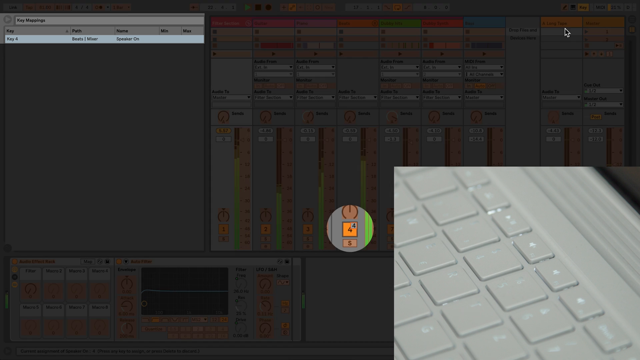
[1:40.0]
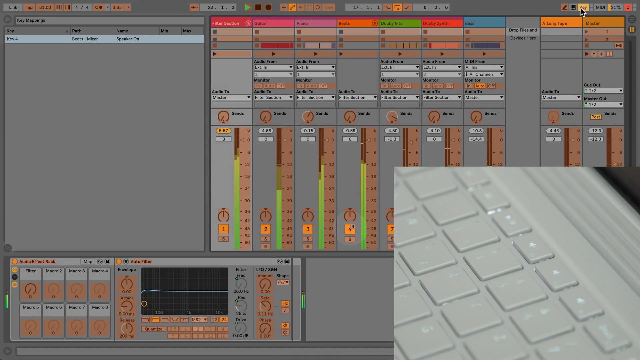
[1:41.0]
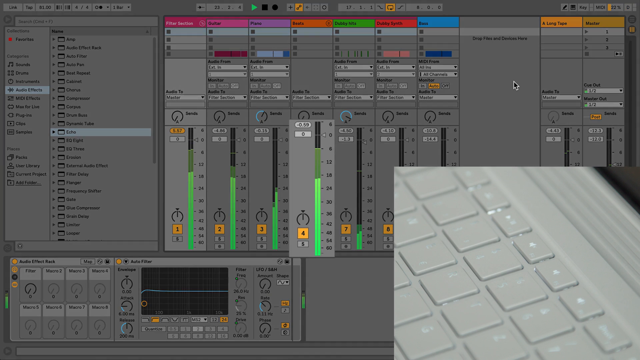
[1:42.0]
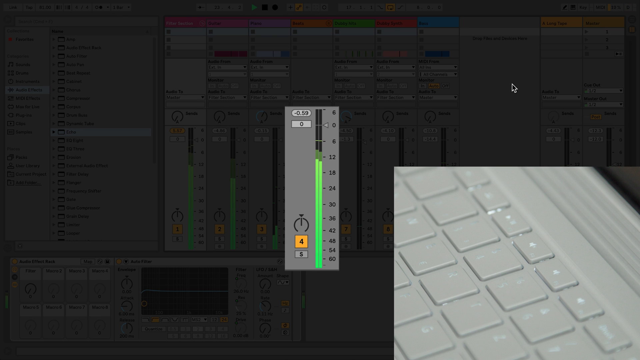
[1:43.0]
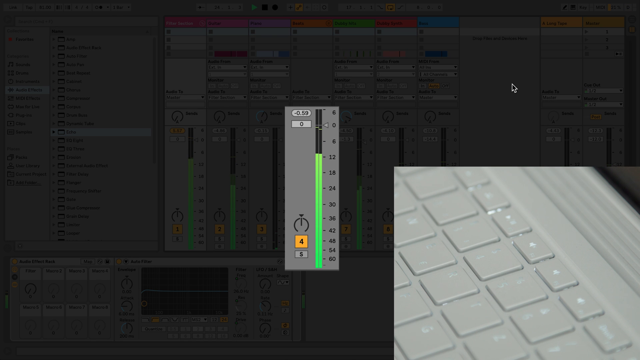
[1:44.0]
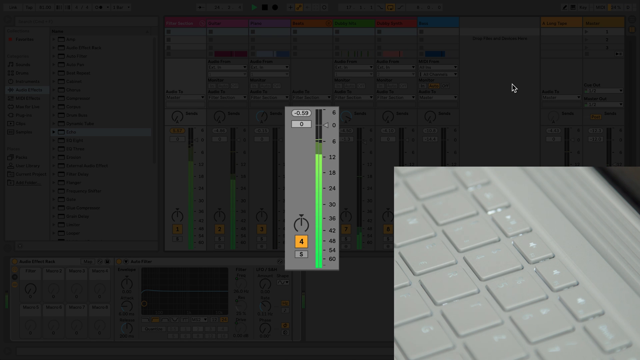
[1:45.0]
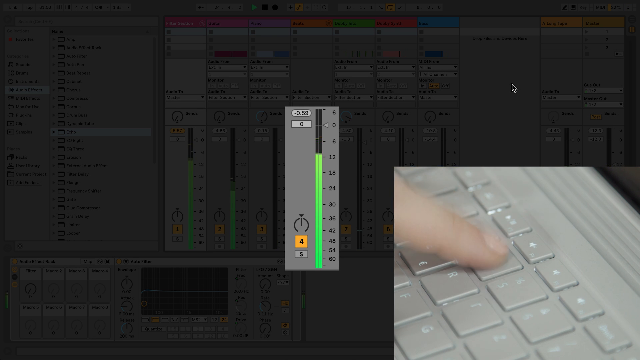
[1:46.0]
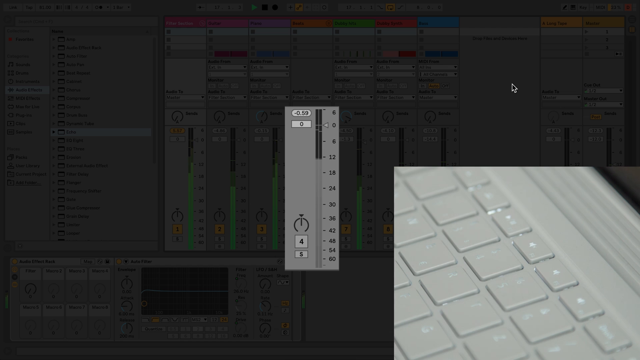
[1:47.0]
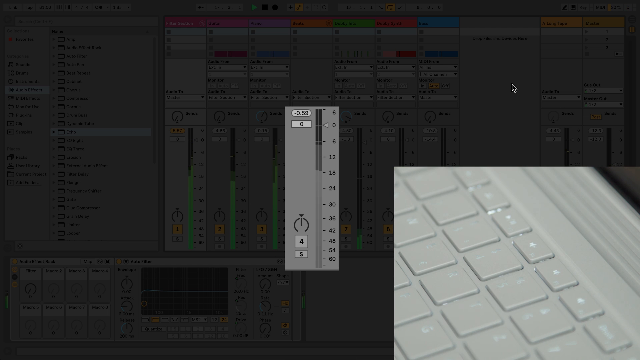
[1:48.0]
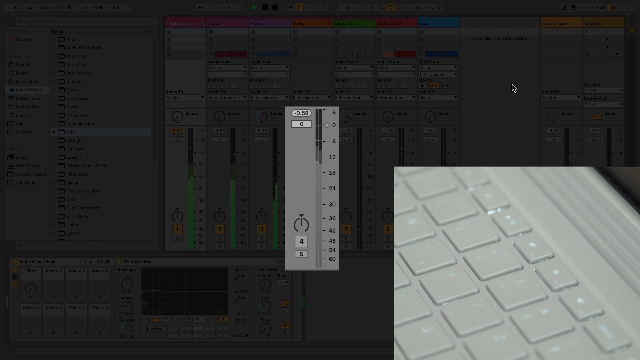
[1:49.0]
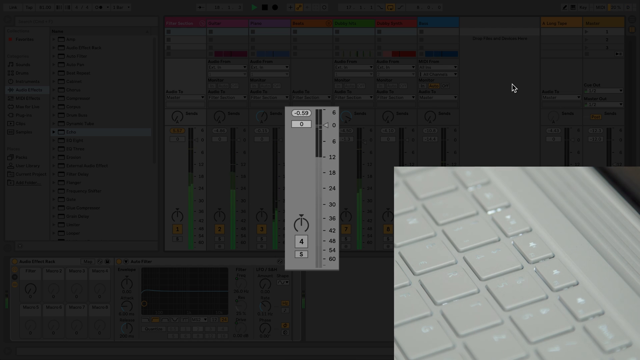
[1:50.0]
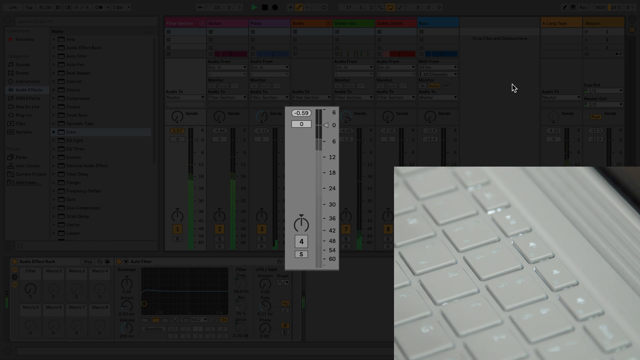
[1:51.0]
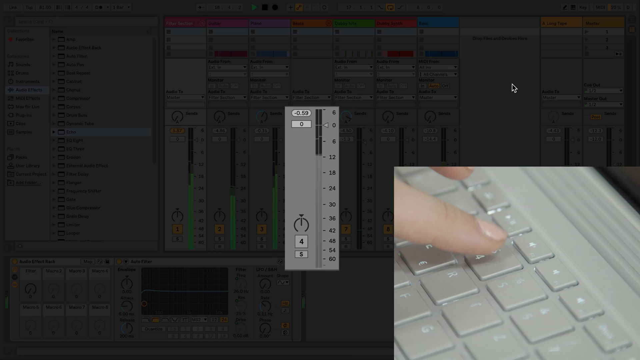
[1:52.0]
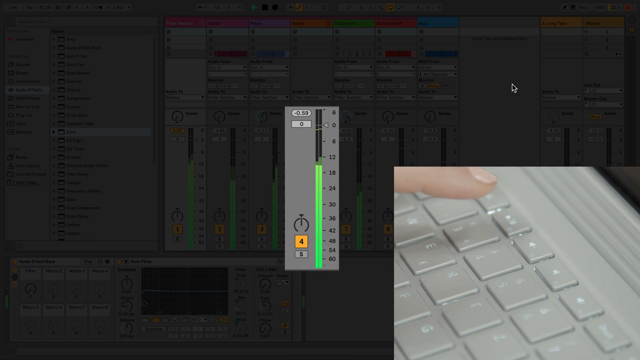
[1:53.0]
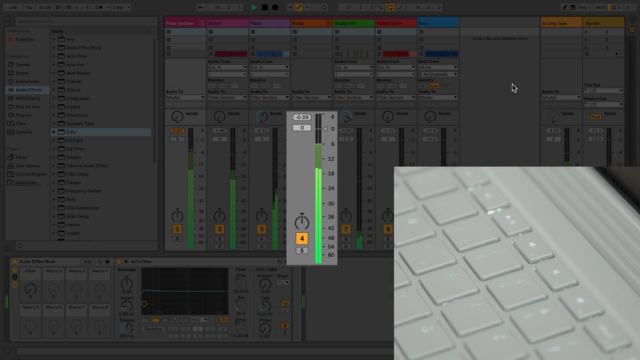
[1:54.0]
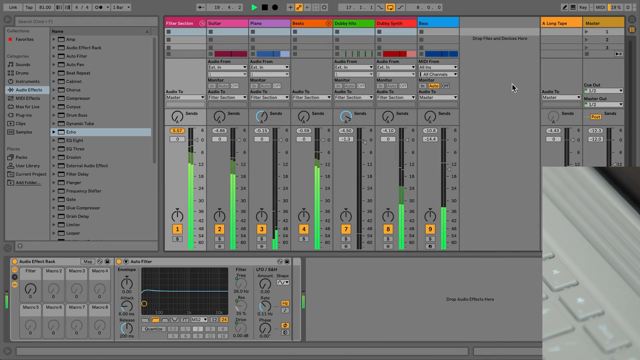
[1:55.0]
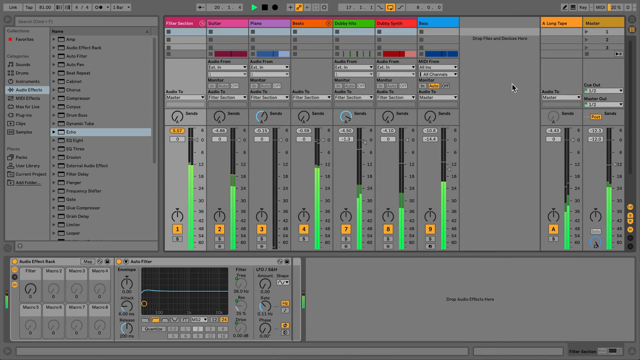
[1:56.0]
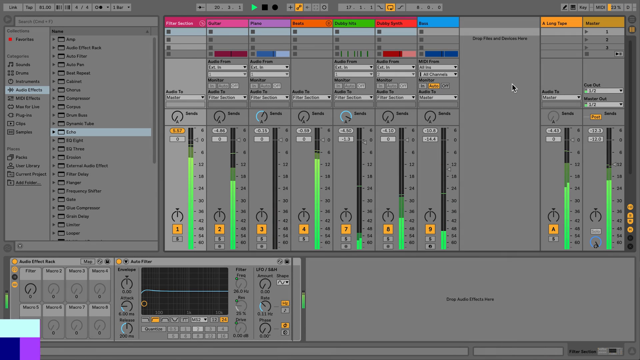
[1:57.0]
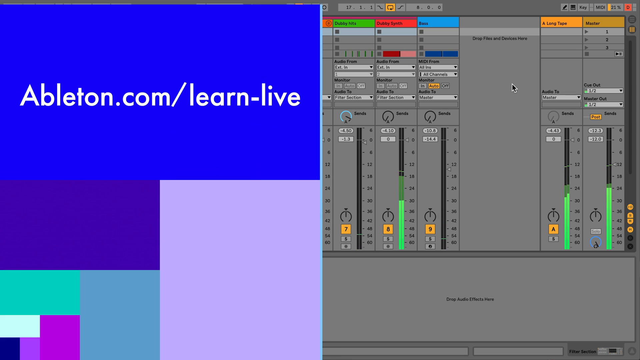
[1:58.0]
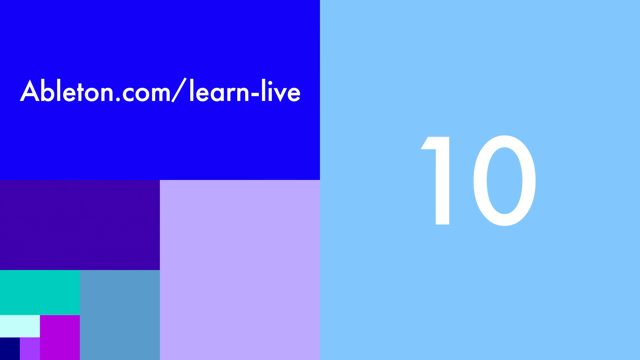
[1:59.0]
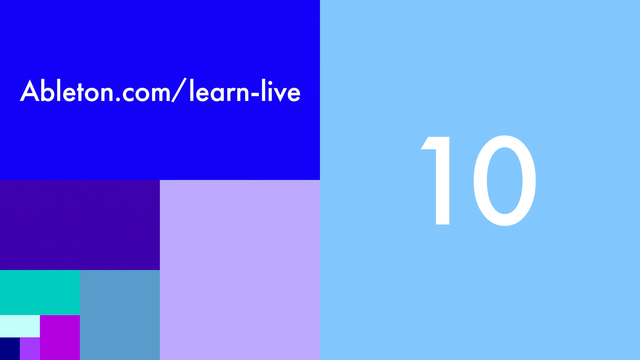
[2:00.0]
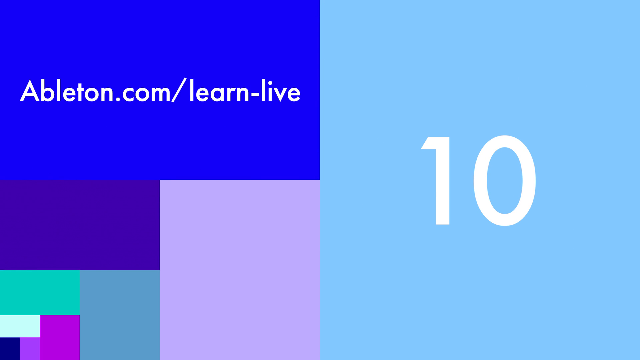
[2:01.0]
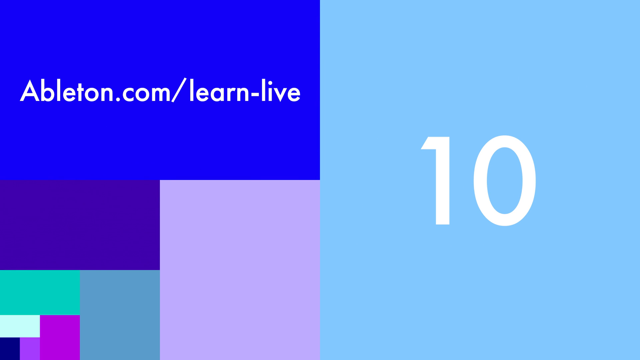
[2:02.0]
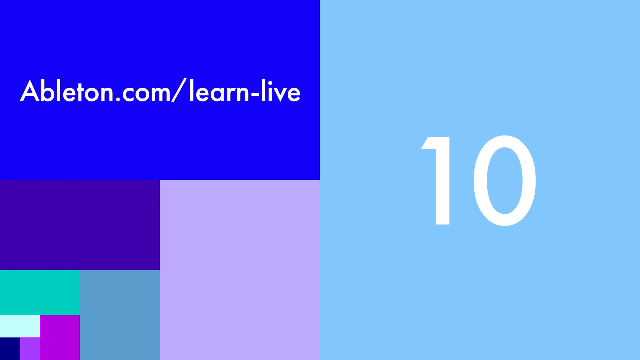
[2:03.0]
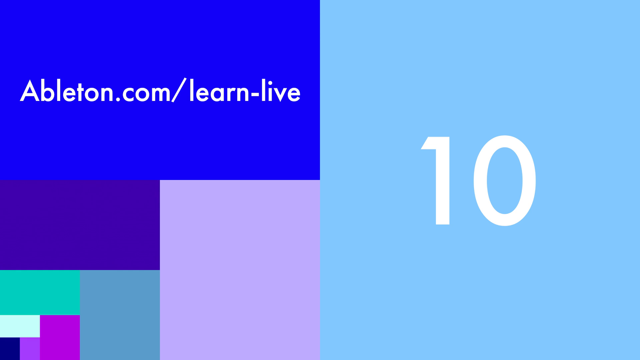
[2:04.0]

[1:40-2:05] The mixing board on the computer screen is grayed out, and a little circle highlights the settings on one of the inputs, the number 4 in a little orange box. An inset video of a computer keyboard is near the number 4. The shading on the mixing board screen goes away, and one of the inputs is highlighted and popped out on the screen, giving a clear image of the number 4, the gain button, and the meter, which is green or black to show the level. In the keyboard inset, a finger presses 4, and the number 4 on the pop-out loses its color, turning the same color as the surrounding image. She presses it again and it highlights again, apparently showing a way to quickly turn off the data coming from that input. The video then goes to a screen with a series of square and rectangular boxes: a blue box with white writing that reads "ableton.com/learn-live", a large, sort of light blue box taking up half the screen with the number 10 in white on it, and other boxes in purple, mauve and light blue.